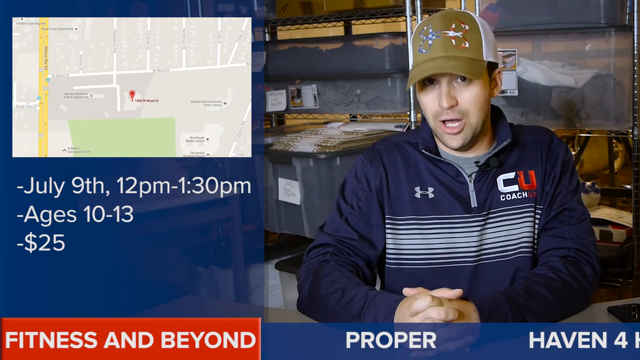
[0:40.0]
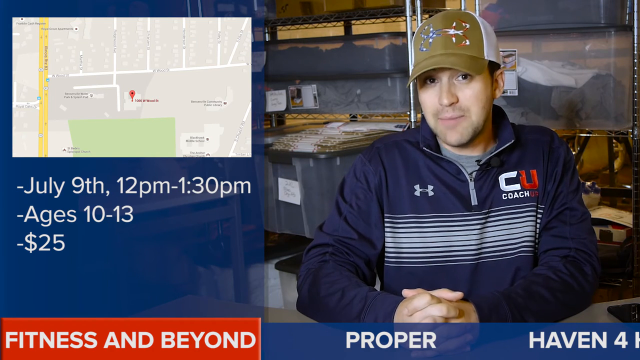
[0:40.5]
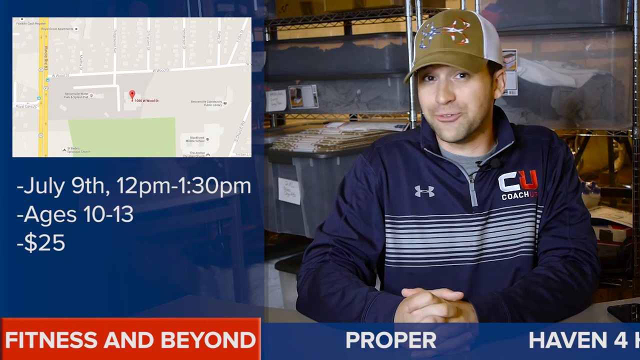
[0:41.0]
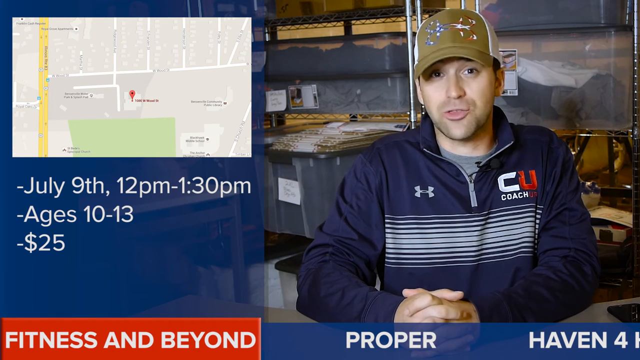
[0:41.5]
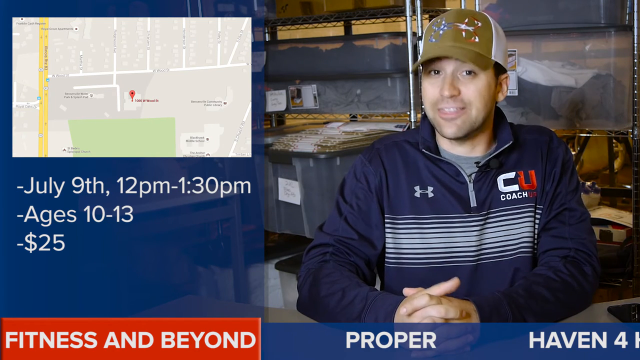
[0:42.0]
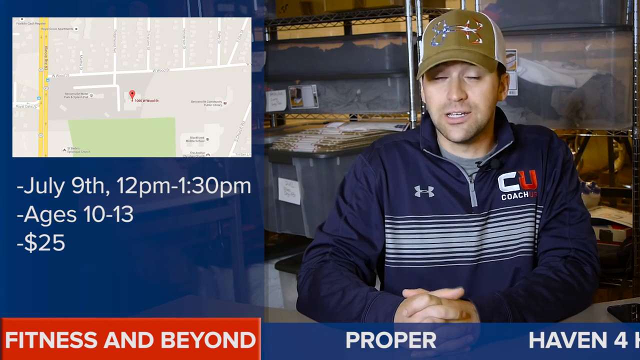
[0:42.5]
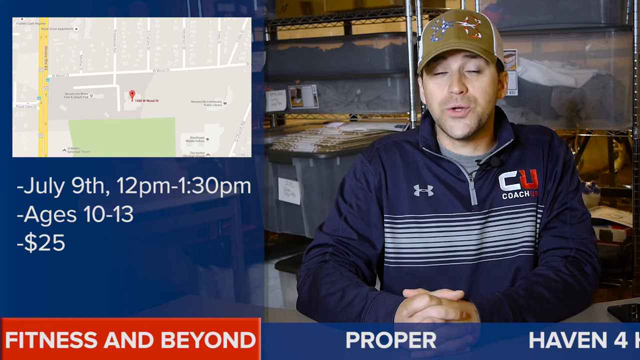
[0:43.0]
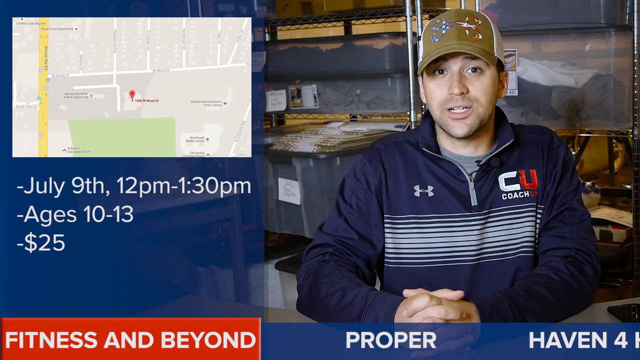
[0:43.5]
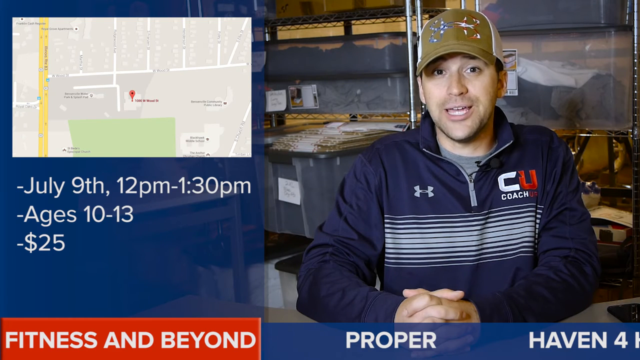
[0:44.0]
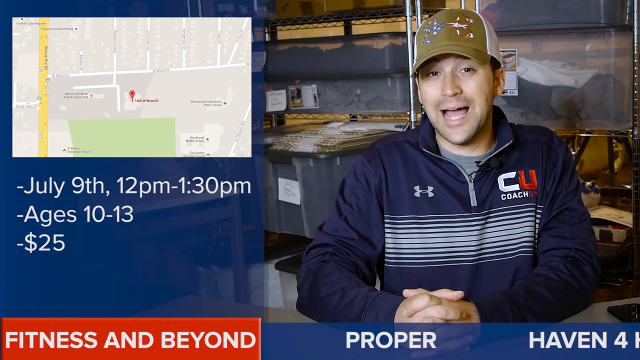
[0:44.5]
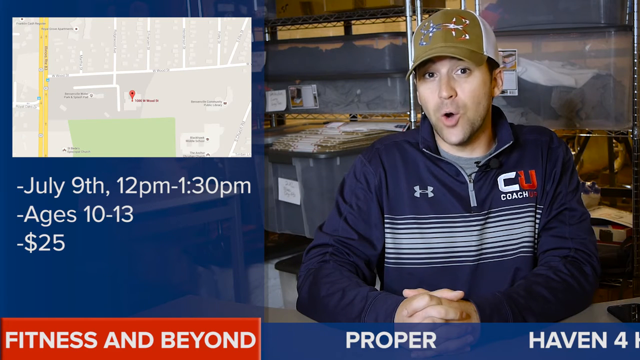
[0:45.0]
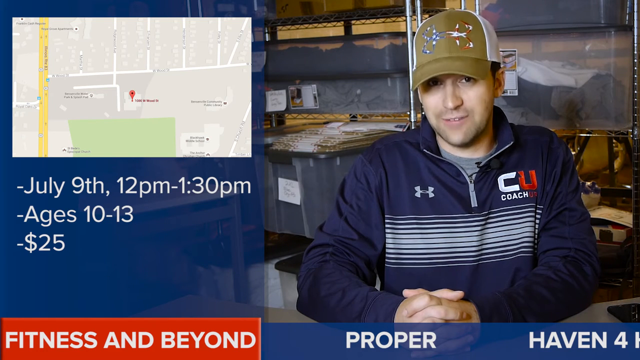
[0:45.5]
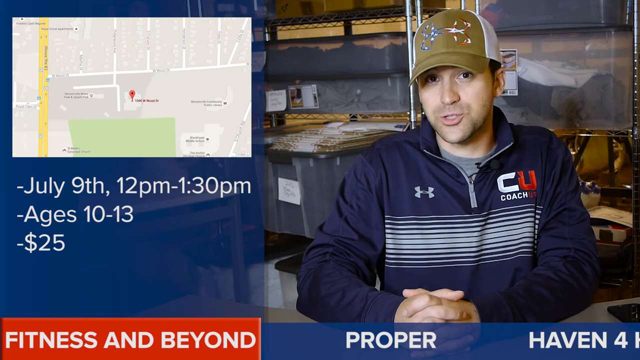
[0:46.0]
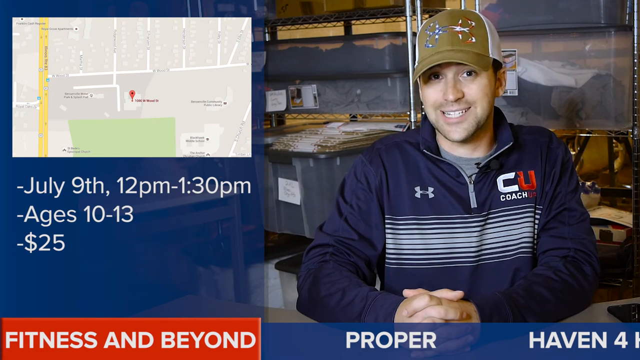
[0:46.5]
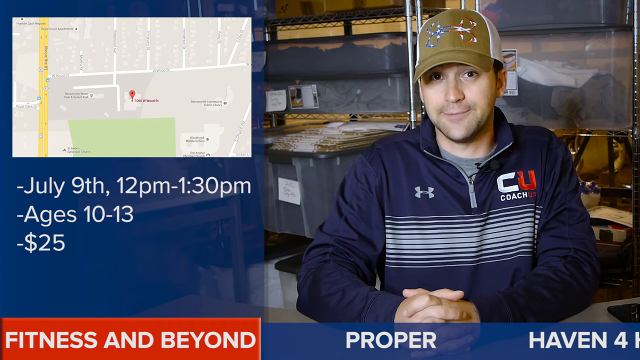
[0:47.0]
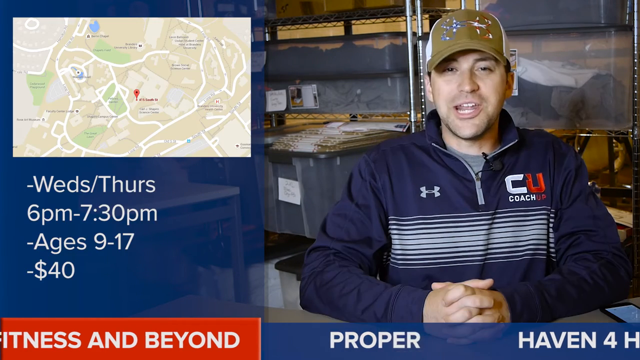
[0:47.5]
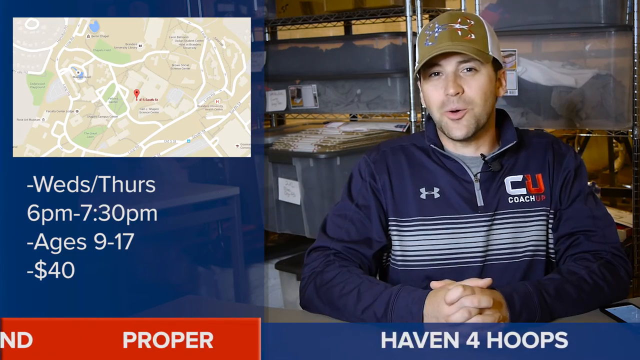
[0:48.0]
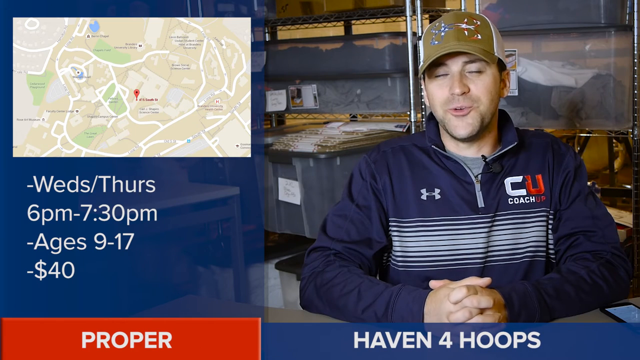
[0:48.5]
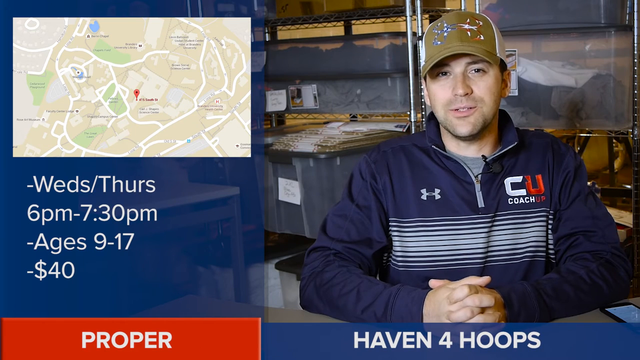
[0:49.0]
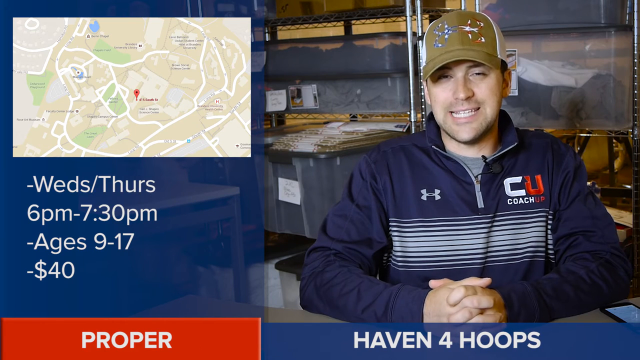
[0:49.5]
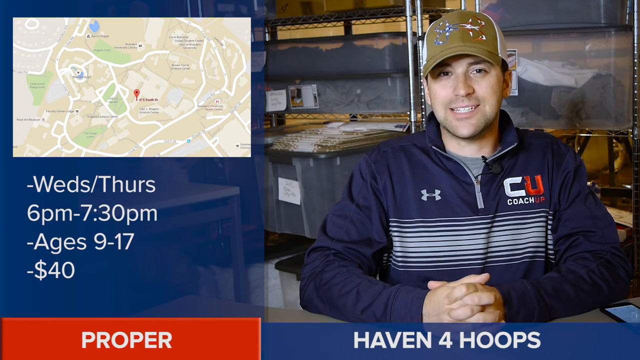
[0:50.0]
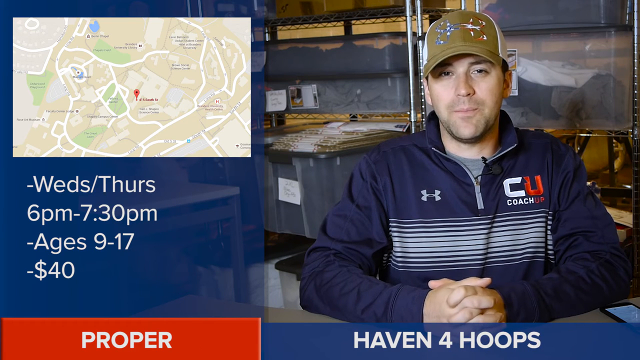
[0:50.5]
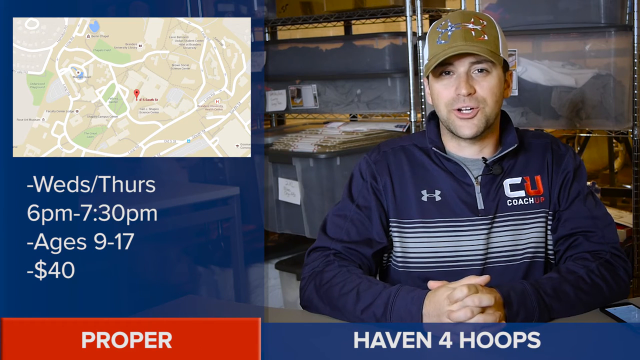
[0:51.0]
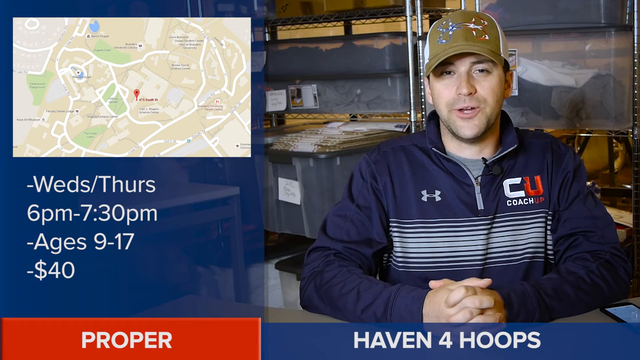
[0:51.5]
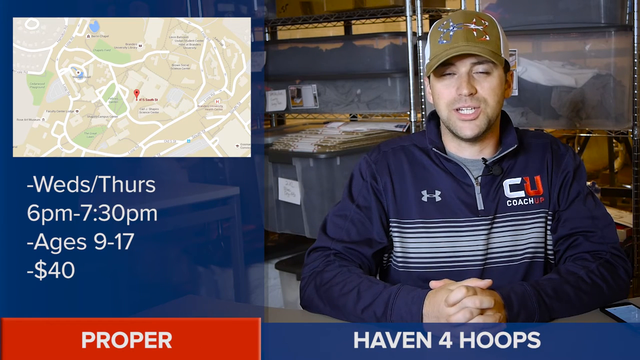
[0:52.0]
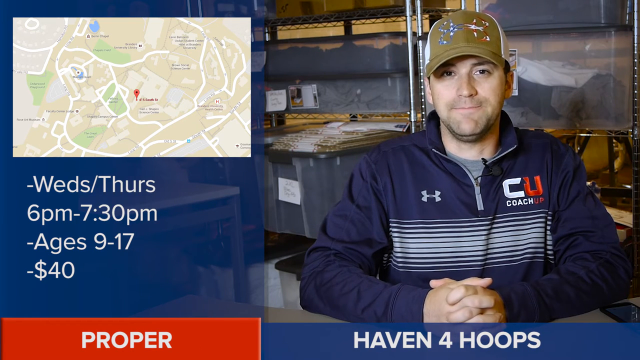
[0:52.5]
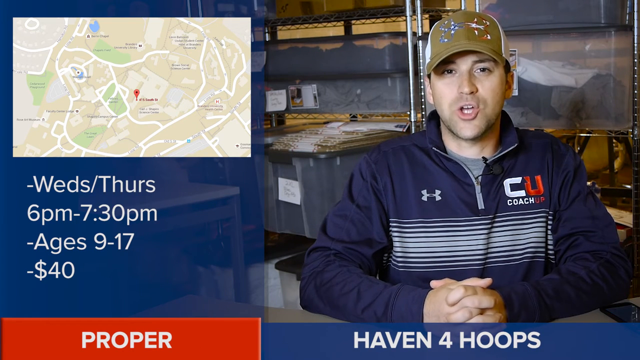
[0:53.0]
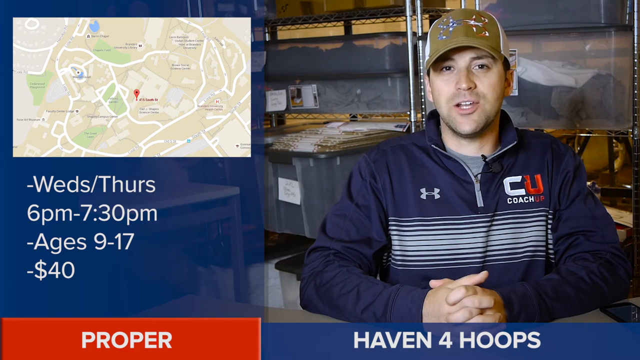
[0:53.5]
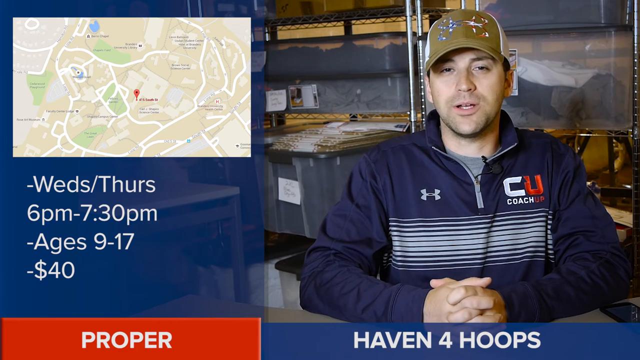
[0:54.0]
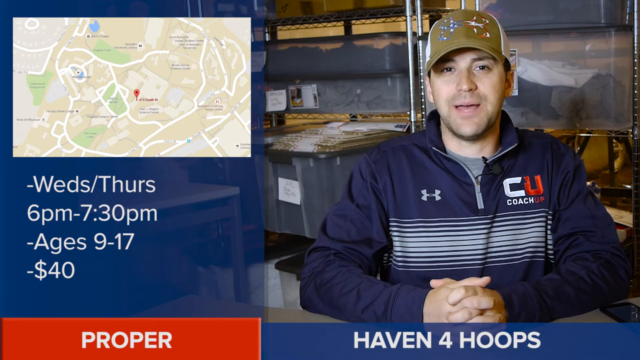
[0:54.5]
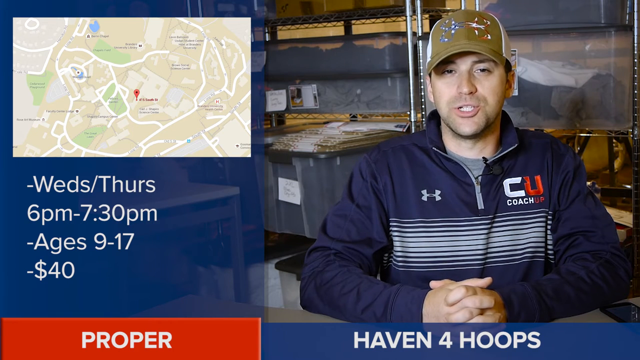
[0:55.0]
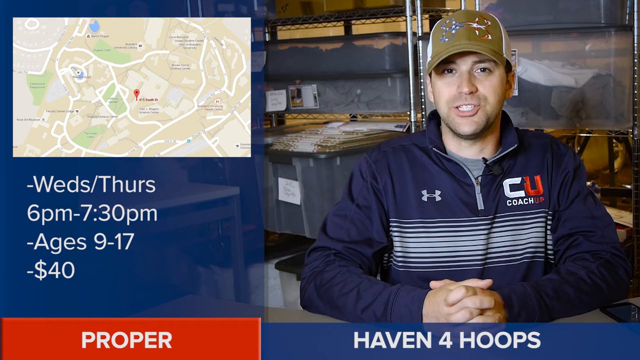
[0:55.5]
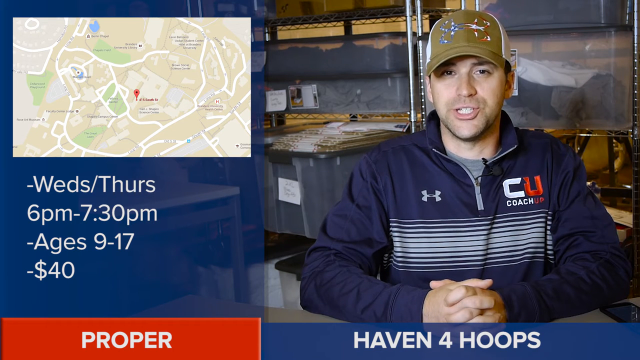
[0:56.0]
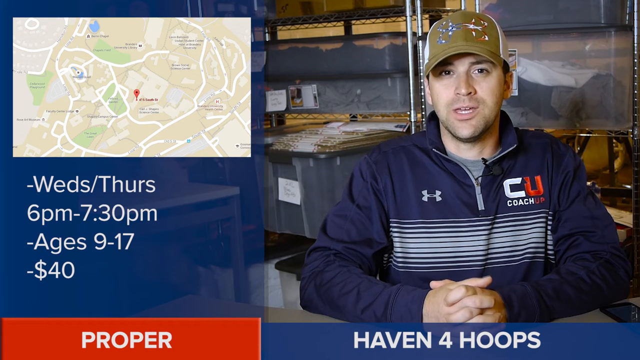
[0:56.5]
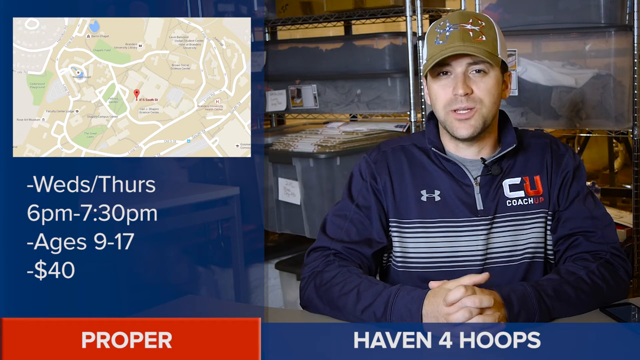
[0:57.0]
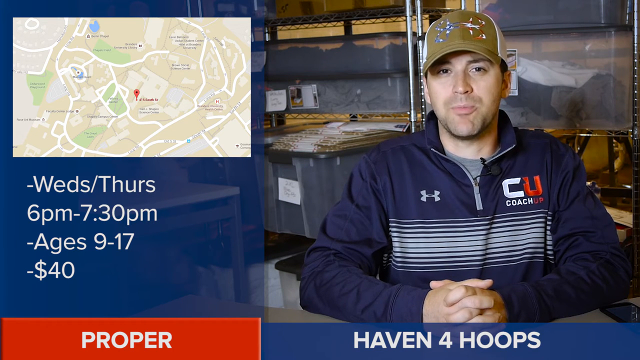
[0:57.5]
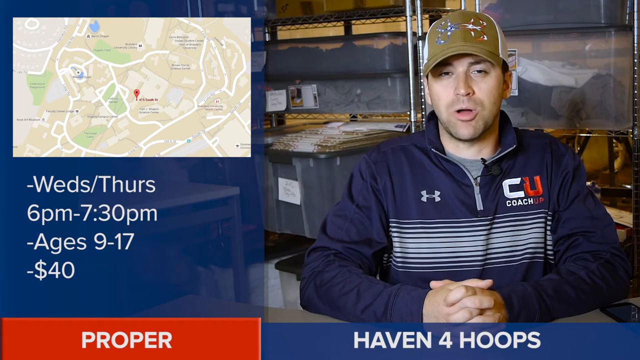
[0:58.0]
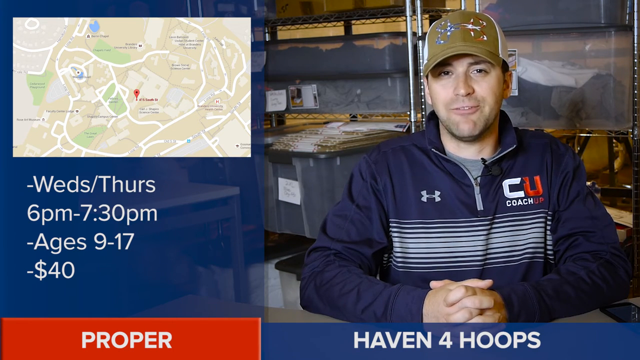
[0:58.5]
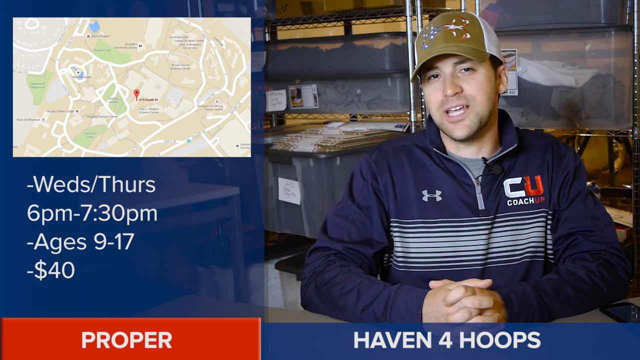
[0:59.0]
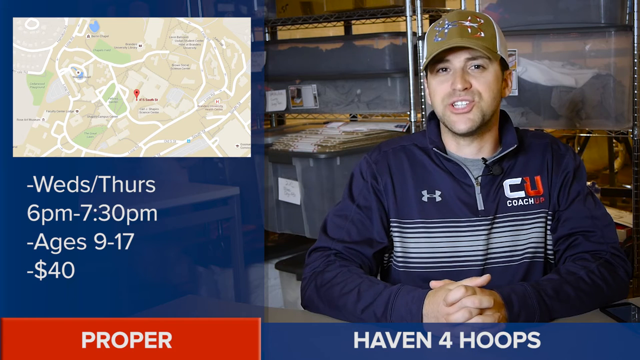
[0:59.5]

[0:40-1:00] A man sits in some type of garage area with storage boxes behind him. Words slide across the bottom of the screen: one says "proper" and another says "Haven for Hoops." To his left is a Google map with a red pin in the middle, and below it the text reads "July 9th, 12 p.m. to 1.30 p.m., ages 10 through 13, $25." His sweatshirt says "Coach" underneath the logo. Another Google map then appears on the left with a pin in its center, and underneath it the text reads "Wednesday through Thursday, 6 p.m., 7.30 p.m., ages 9 to 17, and $40." The video appears to advertise sports-related coaching classes.